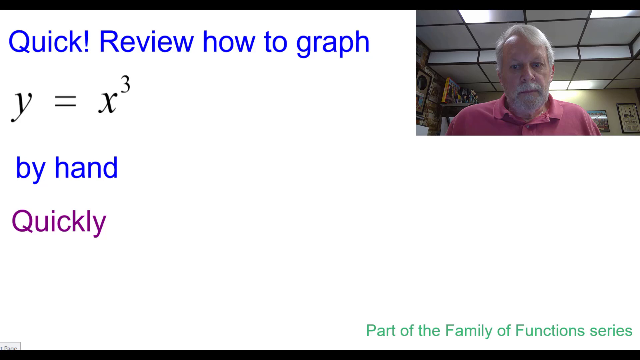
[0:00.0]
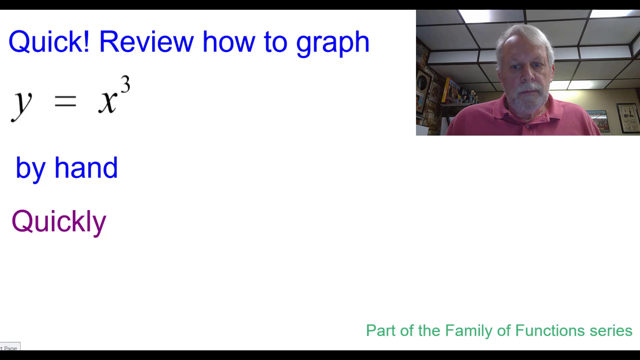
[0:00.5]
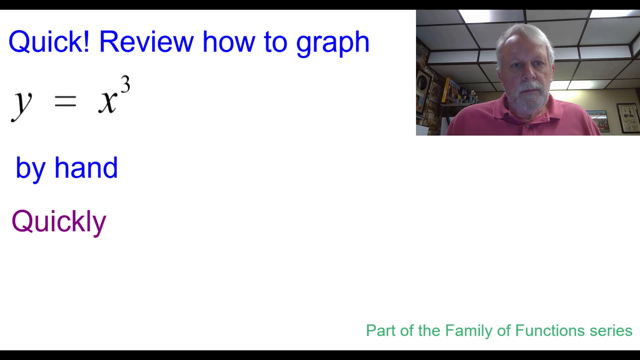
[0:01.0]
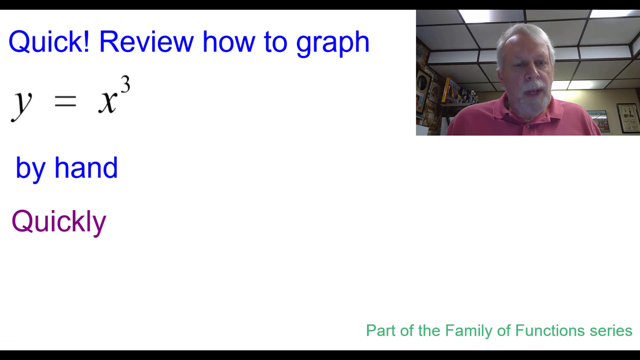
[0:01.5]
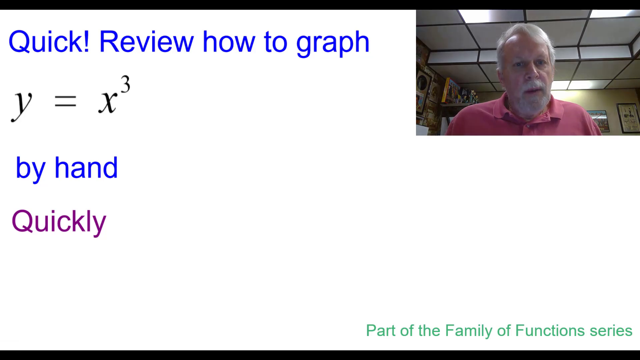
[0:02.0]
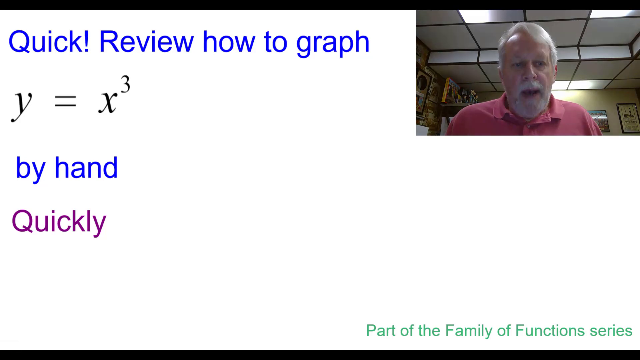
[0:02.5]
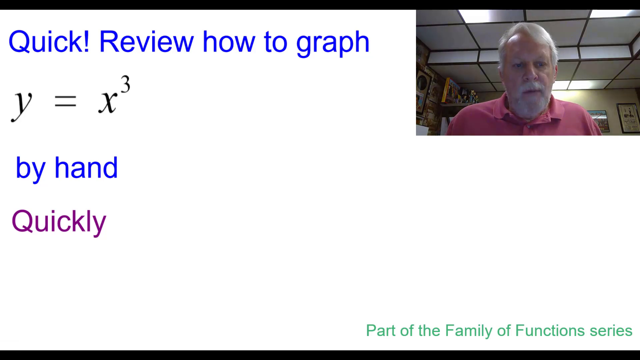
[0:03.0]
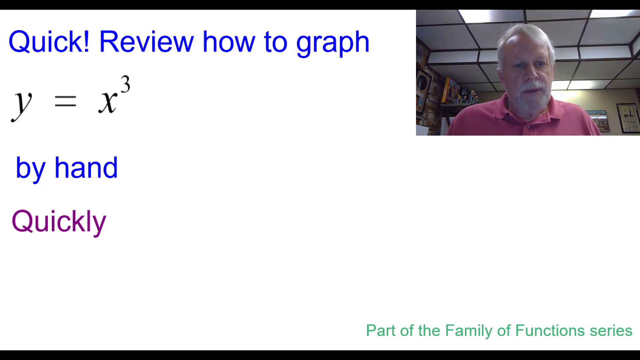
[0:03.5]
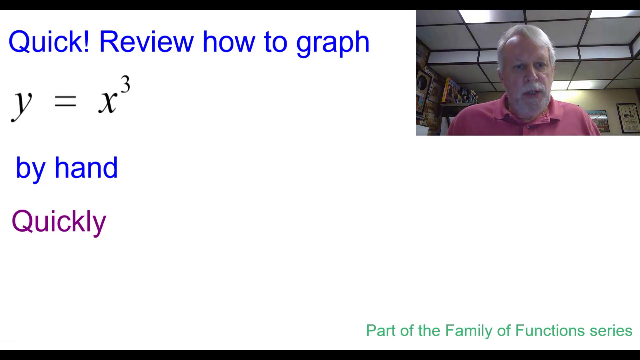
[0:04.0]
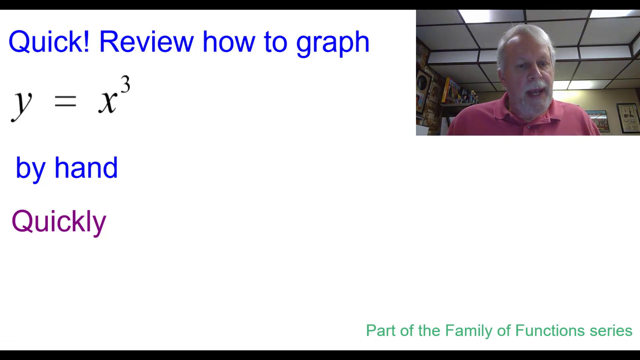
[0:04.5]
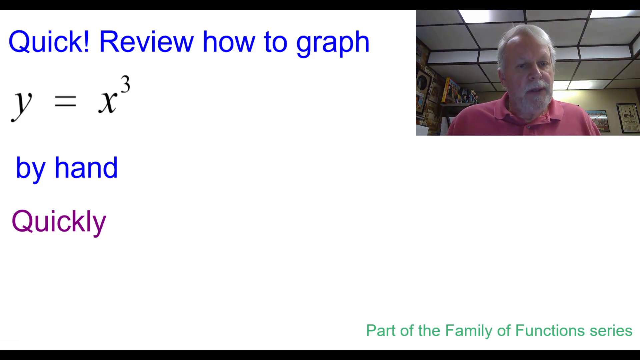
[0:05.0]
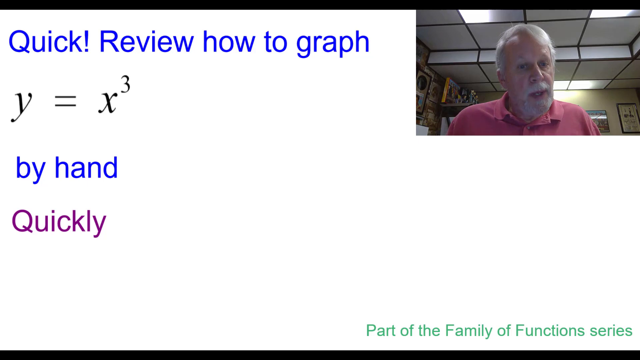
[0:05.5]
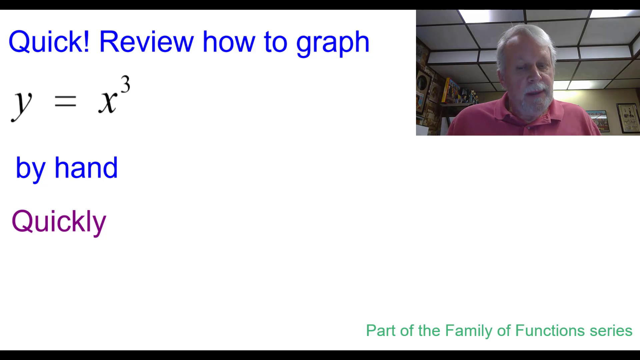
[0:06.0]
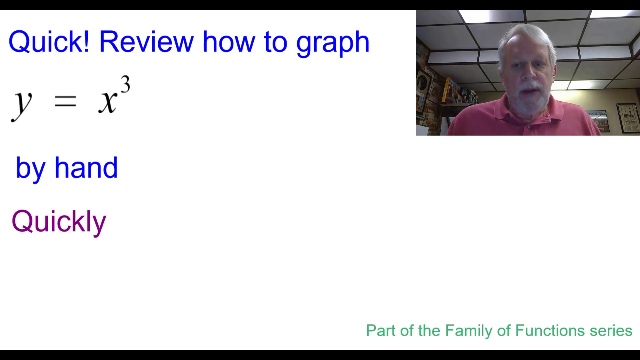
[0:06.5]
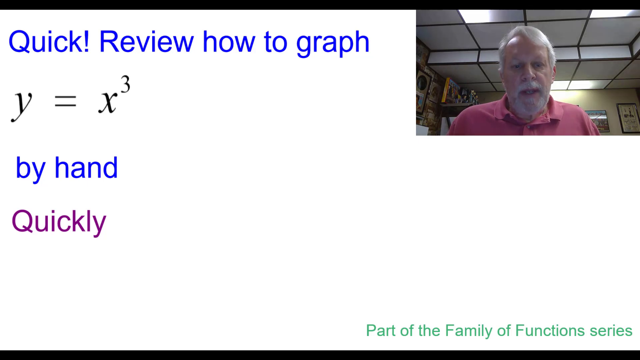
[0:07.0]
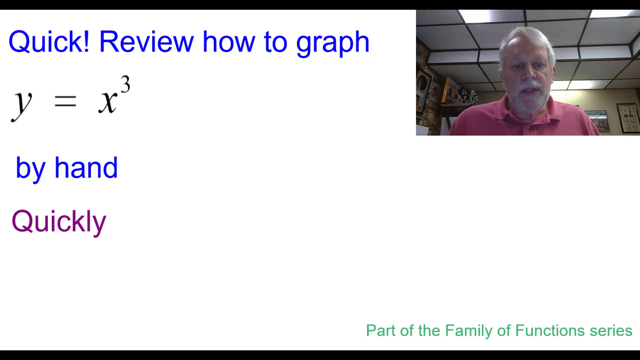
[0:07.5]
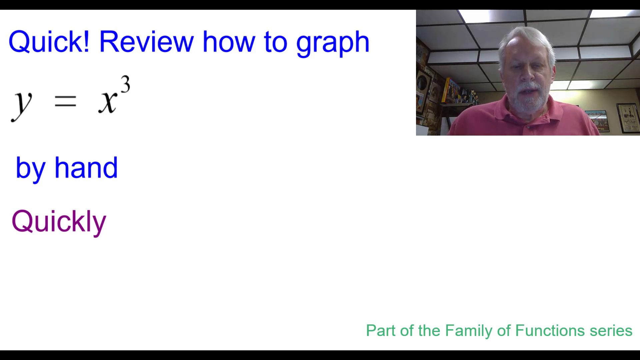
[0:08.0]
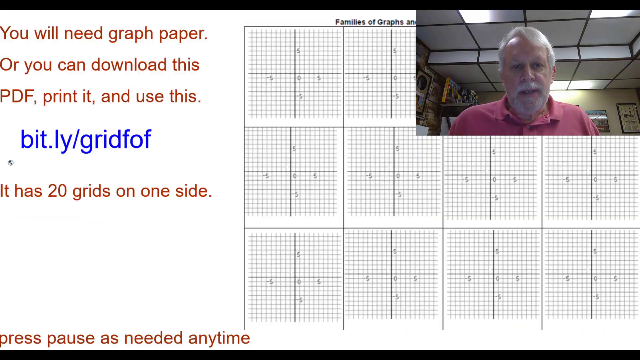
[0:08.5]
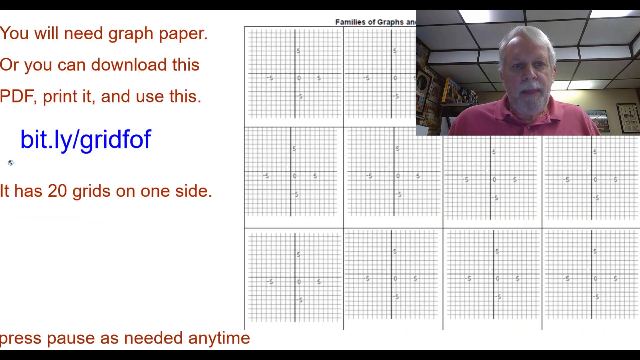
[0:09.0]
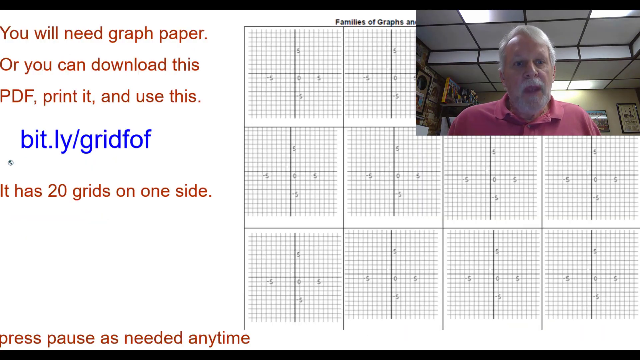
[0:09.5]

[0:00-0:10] An older man with gray hair, a gray beard and a mustache appears in a section in the upper right-hand corner of the screen. He wears a reddish t-shirt and looks into what looks to be a video camera or webcam, speaking into it. The majority of the screen, on the left, is a white background. To the left of him, text reads "quick review how to graph", followed by an algebraic equation, and underneath it says "by hand quickly", so the full text reads "quick review how to graph y equals x to the third power by hand quickly." The text then transitions to additional text over what looks almost like a grid or graph paper of some sort, and then the video cuts.